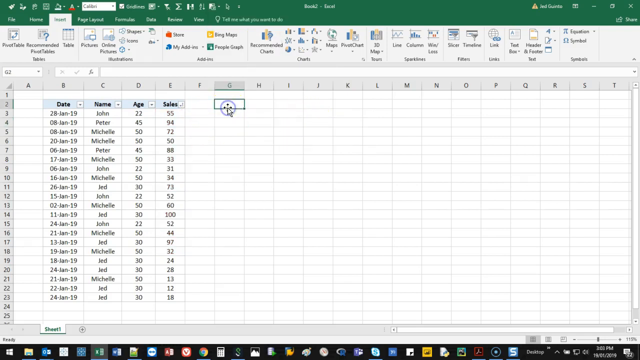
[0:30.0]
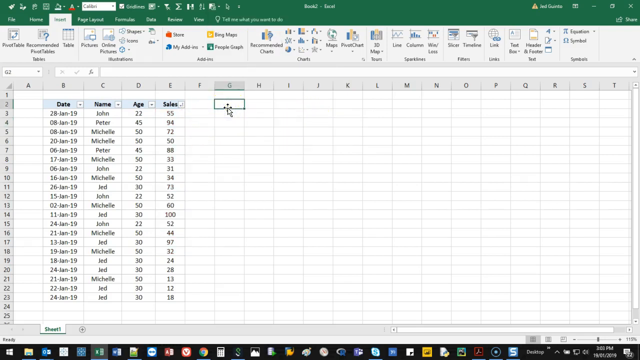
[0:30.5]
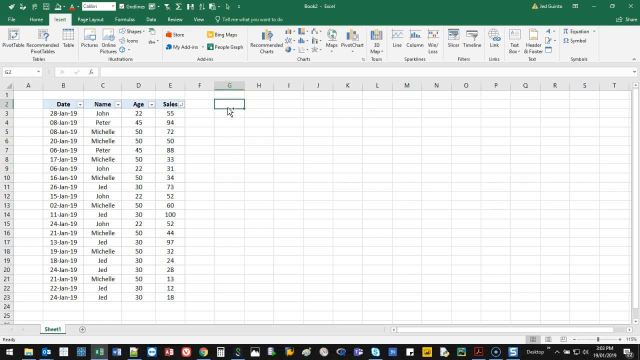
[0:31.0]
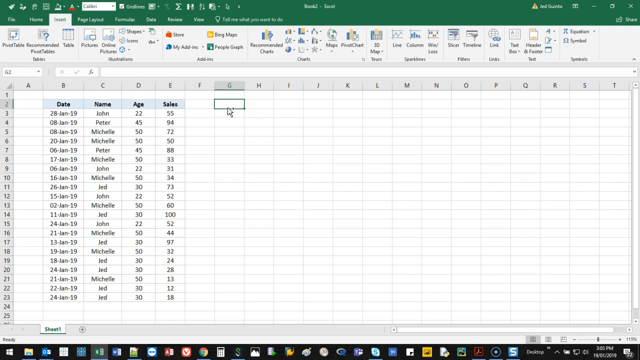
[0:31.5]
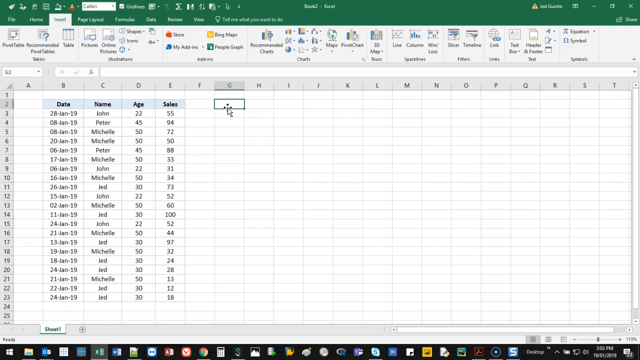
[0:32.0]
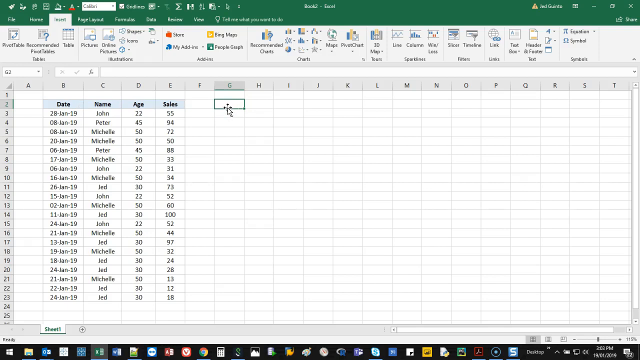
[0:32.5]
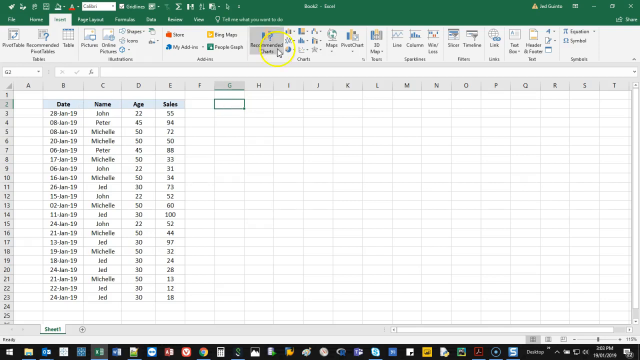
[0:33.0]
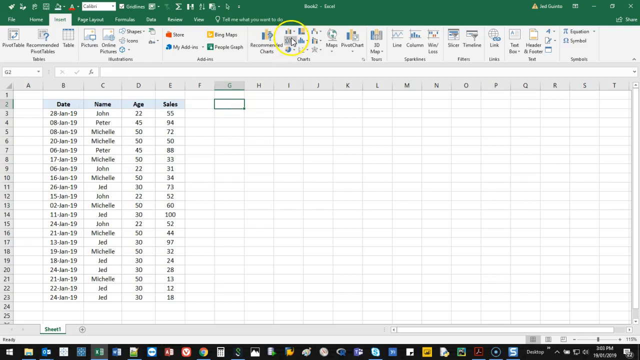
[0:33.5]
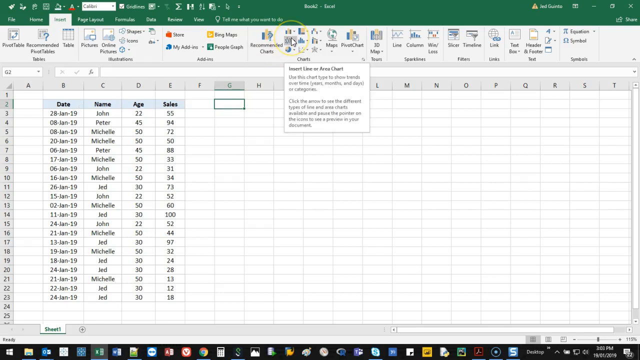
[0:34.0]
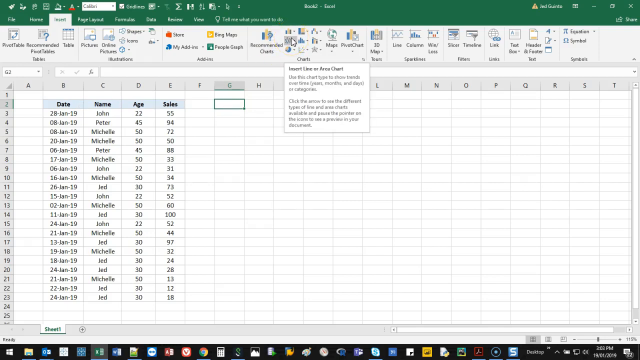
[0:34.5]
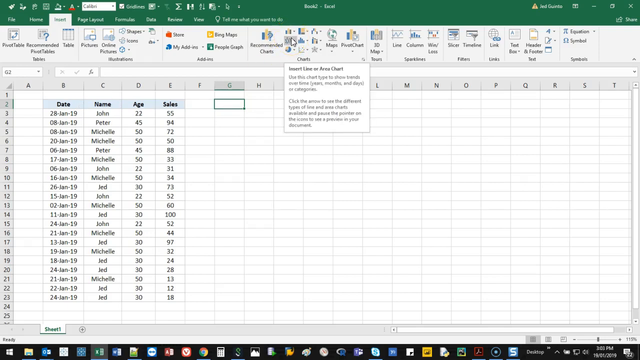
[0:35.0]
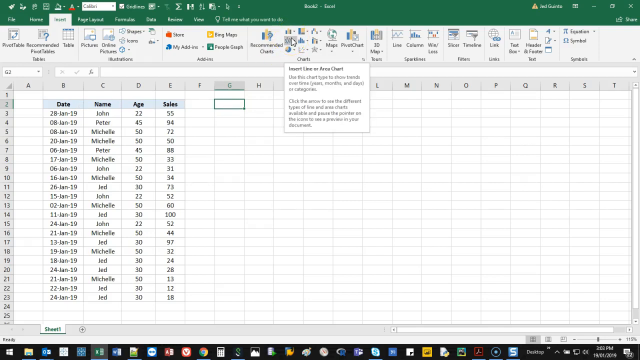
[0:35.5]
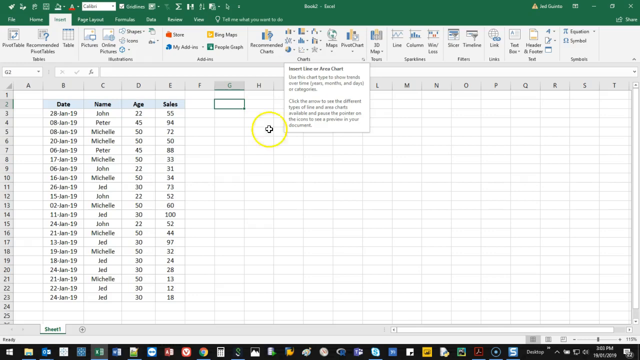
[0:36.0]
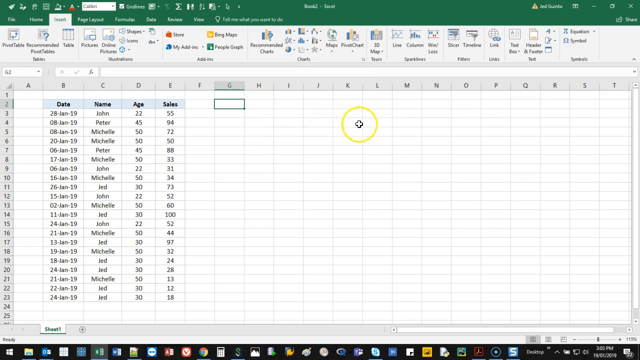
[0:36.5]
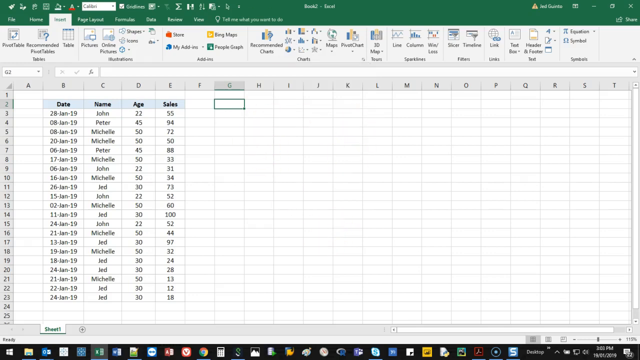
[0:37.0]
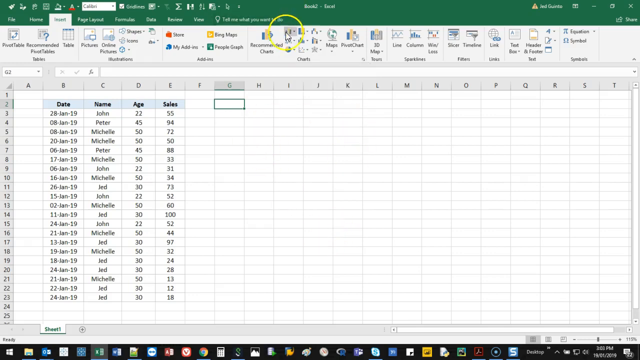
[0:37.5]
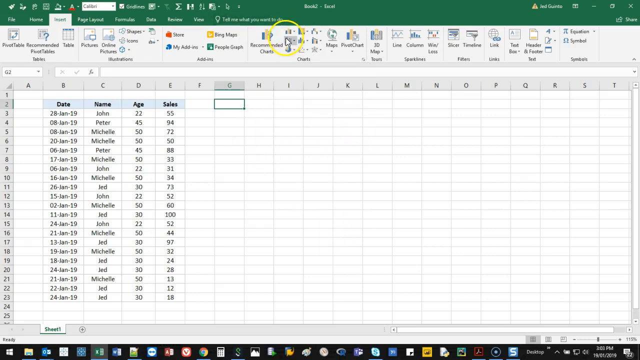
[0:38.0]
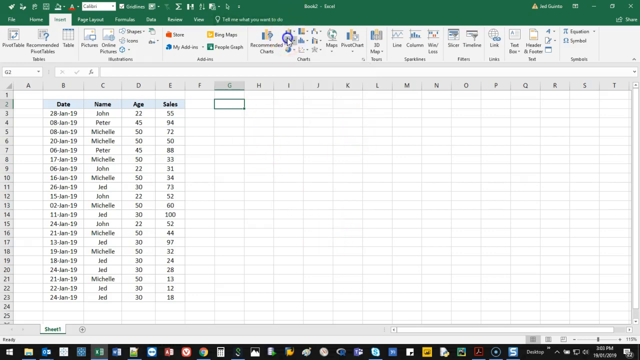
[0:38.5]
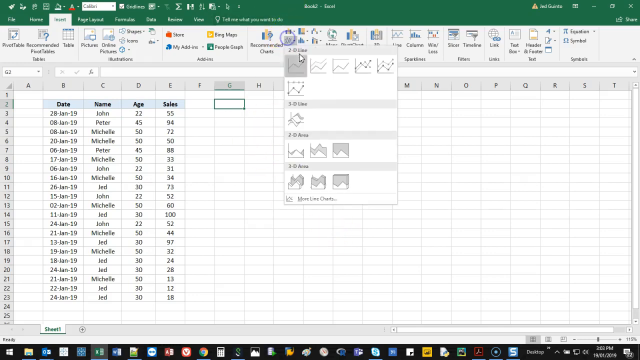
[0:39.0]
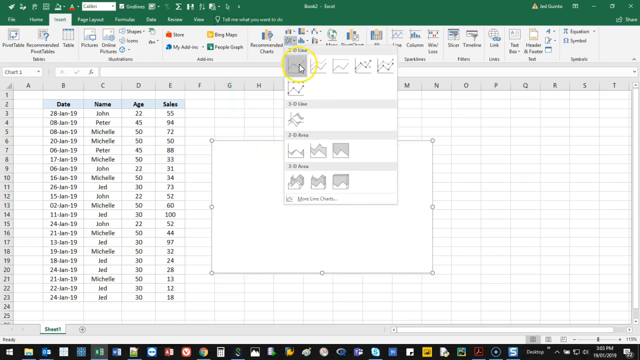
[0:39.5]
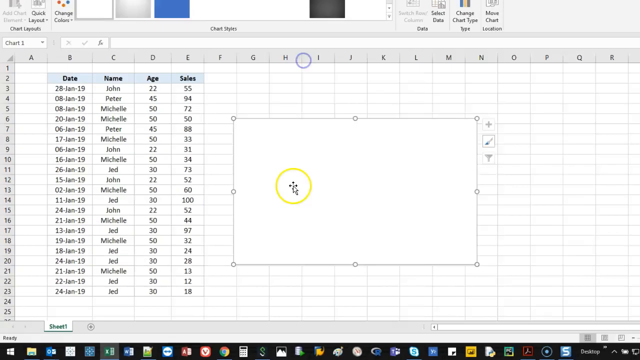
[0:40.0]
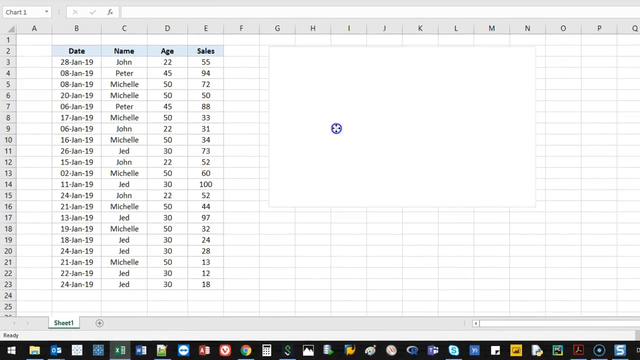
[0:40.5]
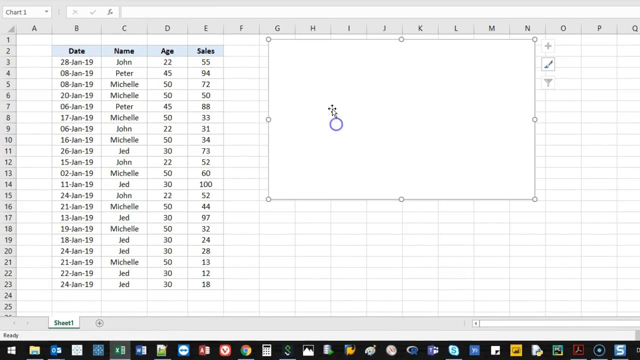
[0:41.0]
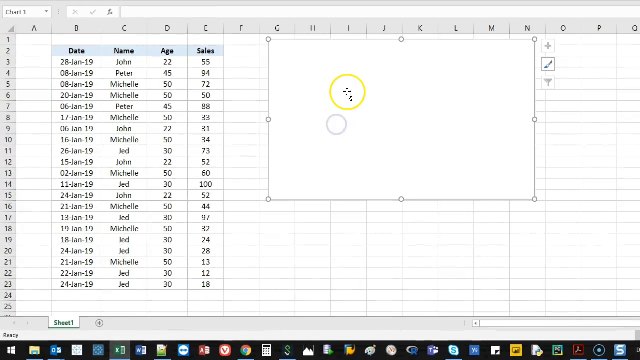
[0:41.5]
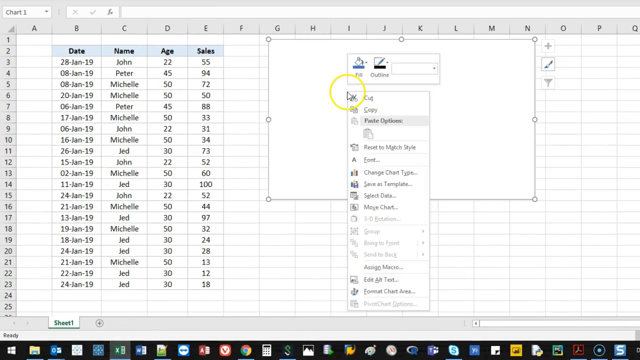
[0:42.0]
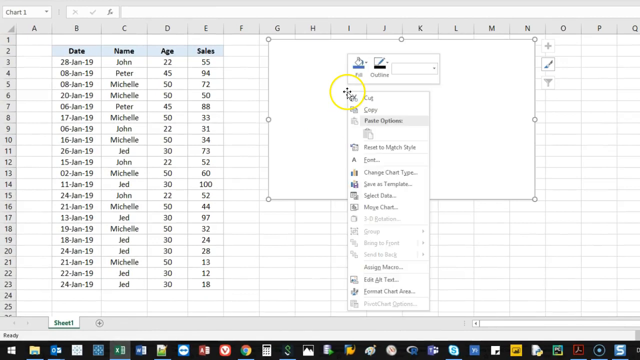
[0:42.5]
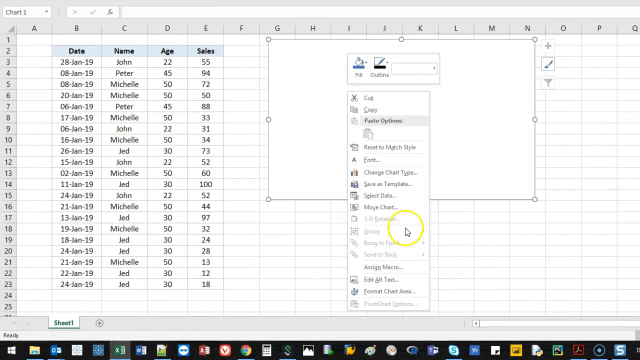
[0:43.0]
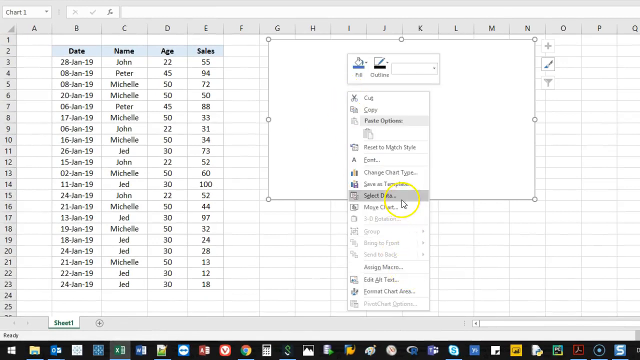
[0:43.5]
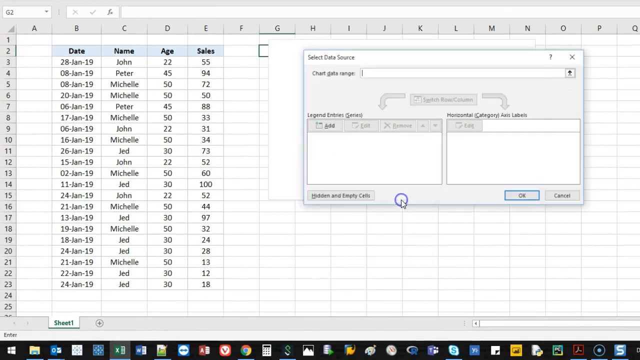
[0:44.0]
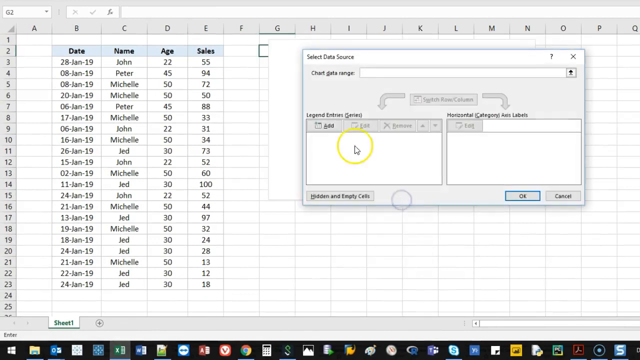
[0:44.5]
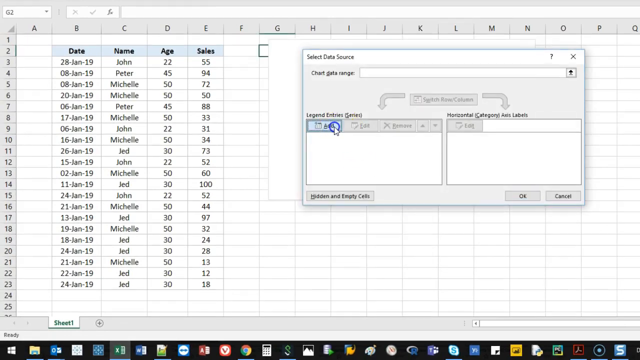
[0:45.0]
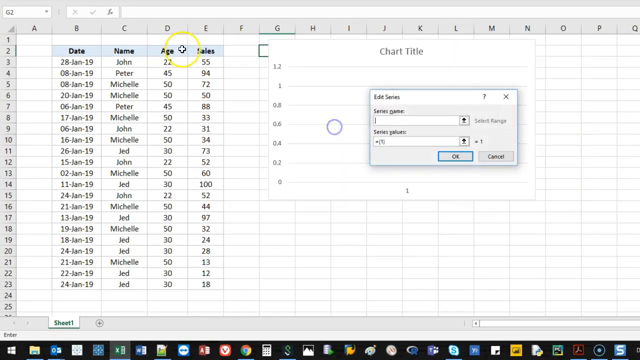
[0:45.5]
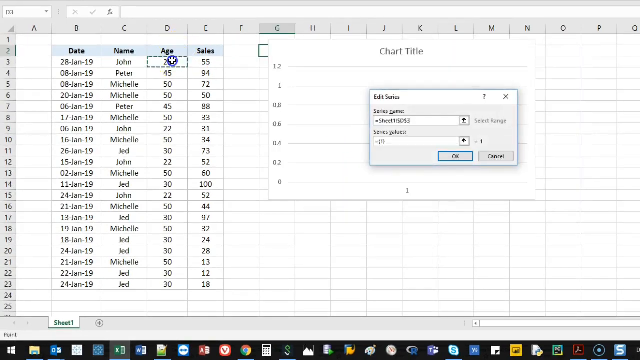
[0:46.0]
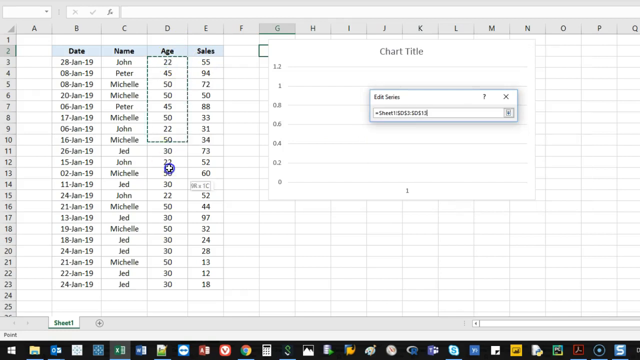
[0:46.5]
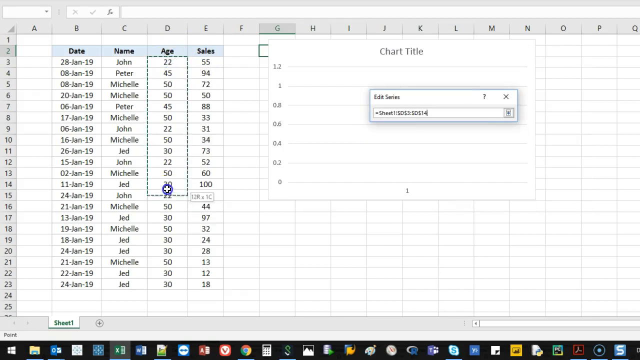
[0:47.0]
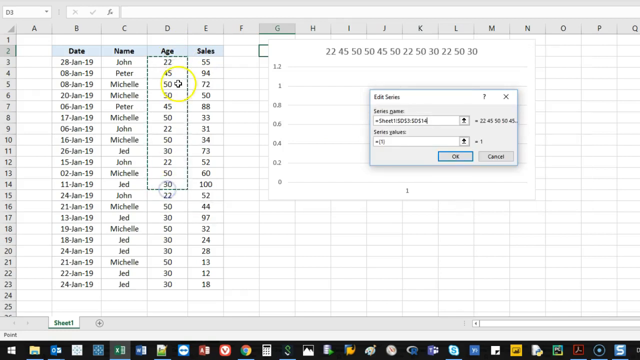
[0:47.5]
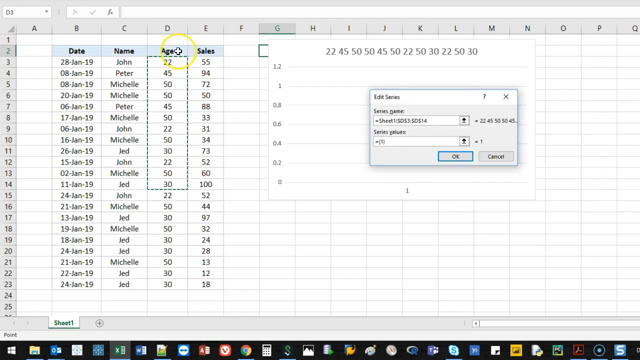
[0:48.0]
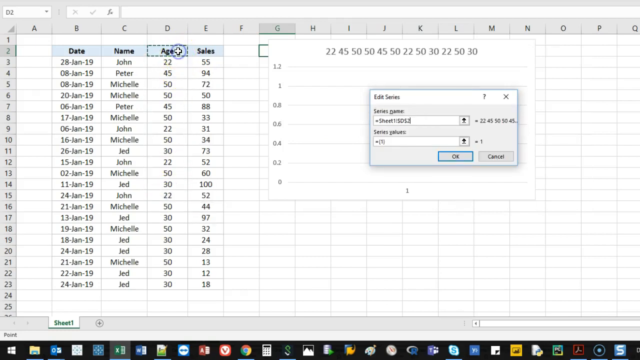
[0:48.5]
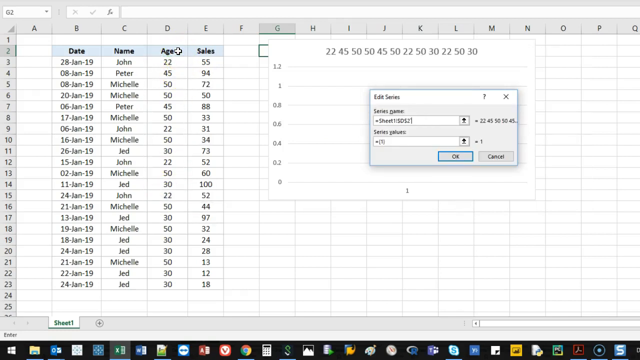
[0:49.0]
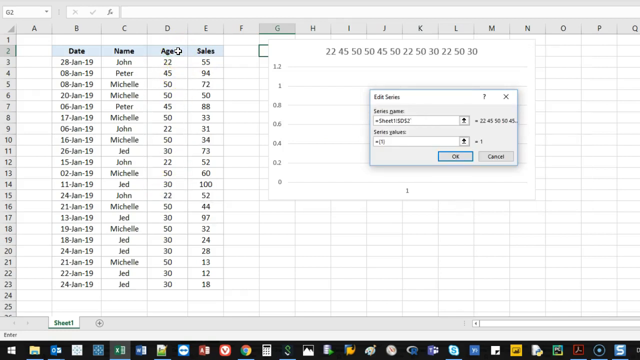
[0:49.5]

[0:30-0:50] The Excel sheet is open with the G2 cell selected. The cursor goes to the toolbar and selects the second button, which looks somewhat like a circle drawn out of angled lines. Hovering over it brings up a white box that says "insert line or area chart" with a short description of how to use the feature. Clicking the button opens a drop-down menu showing a few different chart designs under 2D line, 3D line, 2D area and 3D area sections. The user selects the first chart under the 2D line section, and a rectangular box pops up on top of the spreadsheet with circle size adjusters on the four corners and sides. The user clicks roughly the middle of the box and drags it to the top of the spreadsheet. They right-click on it, bringing down a menu, and click the Select Data option. A Select Data Source window pops up; under the legend entries panel on the left they select the first button, which closes the Select Data Source window, and a smaller rectangular window titled Edit Series comes up with two text input boxes for the series name and series values. The cursor selects the D3 cell, which has the age 22 in it, drags down to the D14 box, then drags back up so that only the age heading cell on D2 is highlighted. The figures in the Edit Series box for series name and series value change.